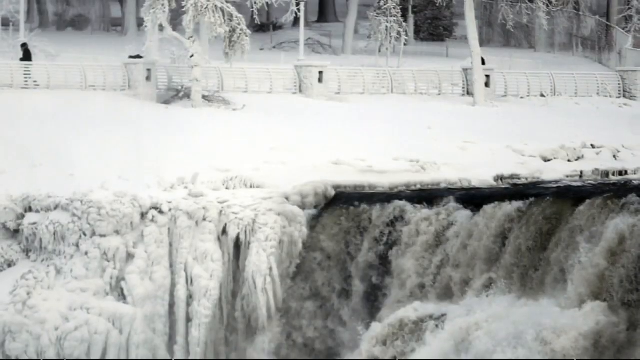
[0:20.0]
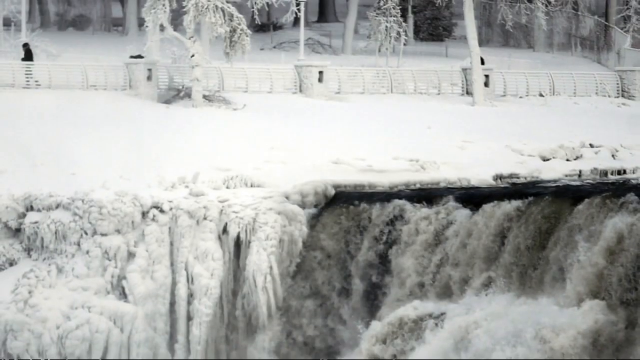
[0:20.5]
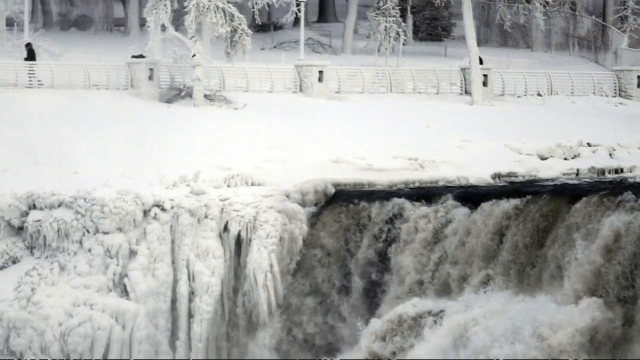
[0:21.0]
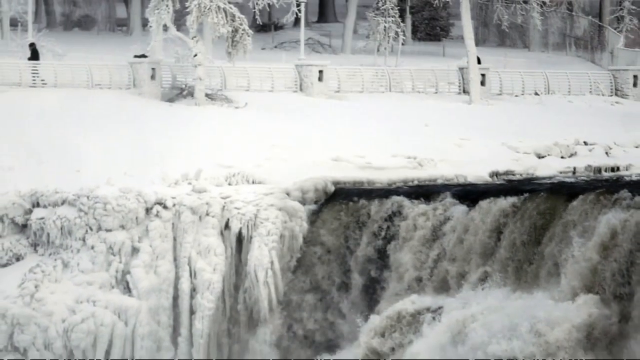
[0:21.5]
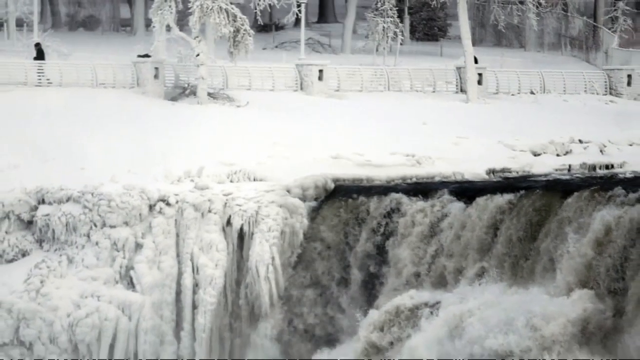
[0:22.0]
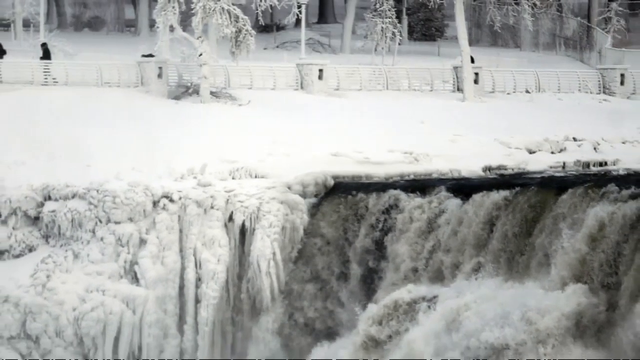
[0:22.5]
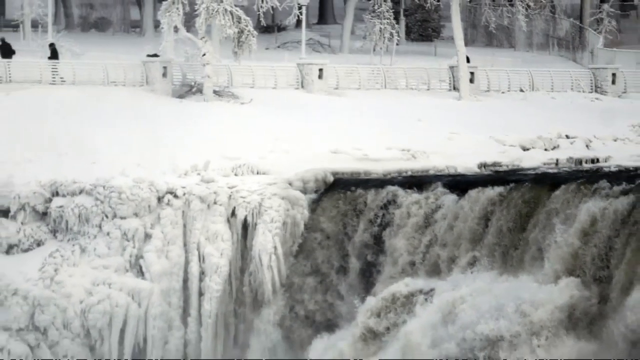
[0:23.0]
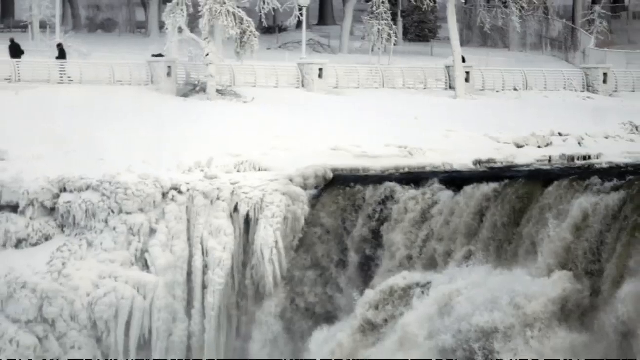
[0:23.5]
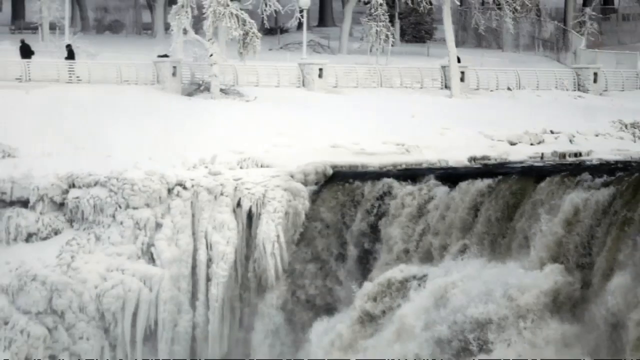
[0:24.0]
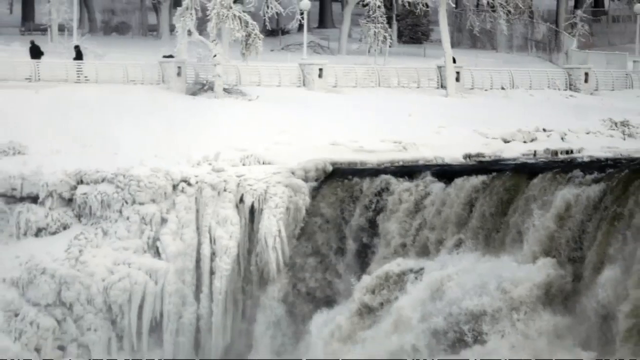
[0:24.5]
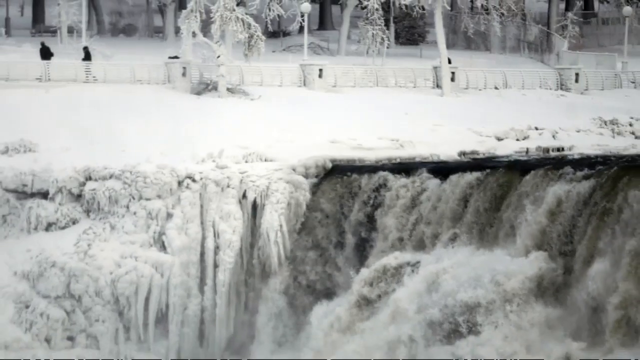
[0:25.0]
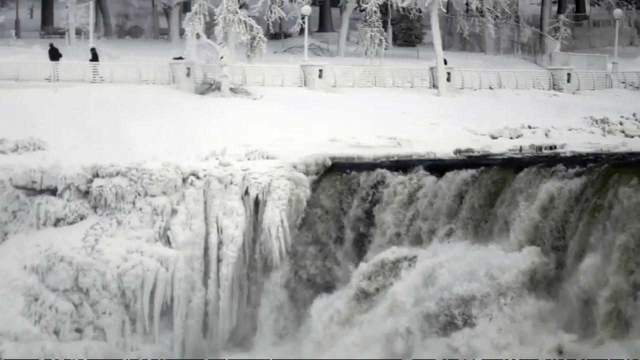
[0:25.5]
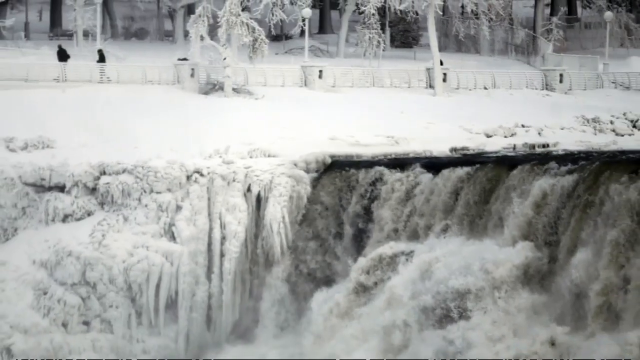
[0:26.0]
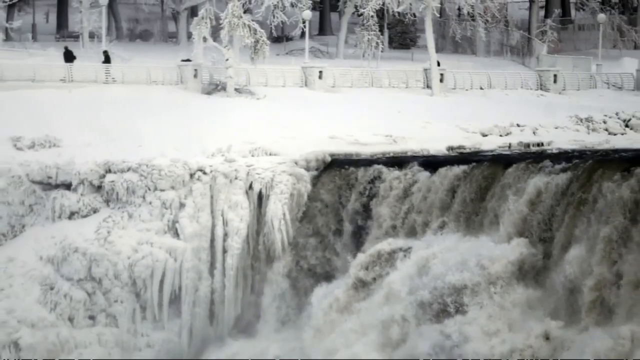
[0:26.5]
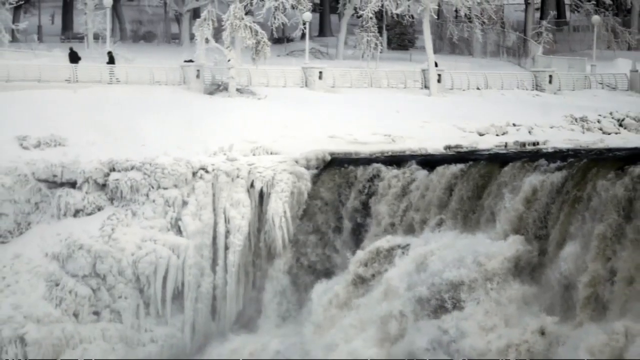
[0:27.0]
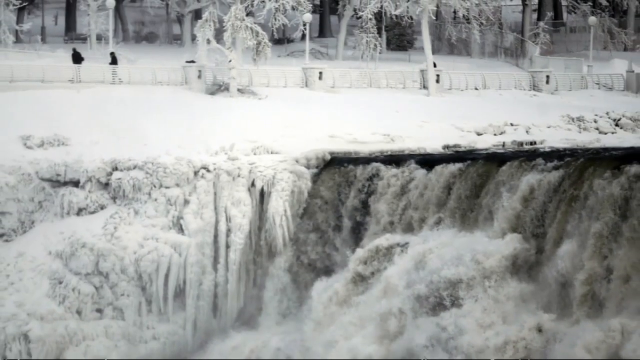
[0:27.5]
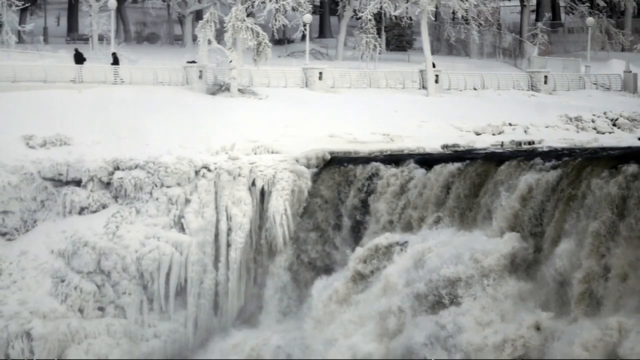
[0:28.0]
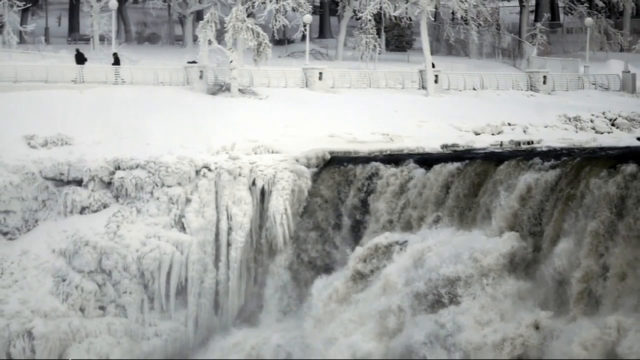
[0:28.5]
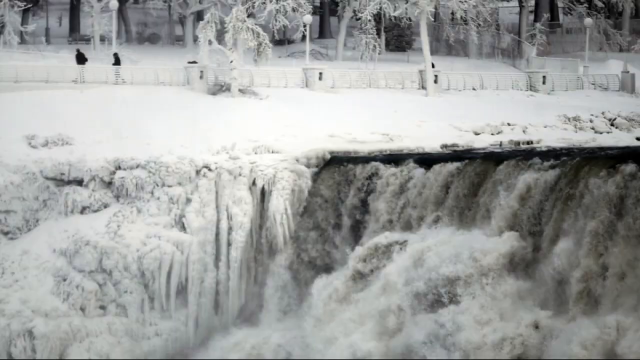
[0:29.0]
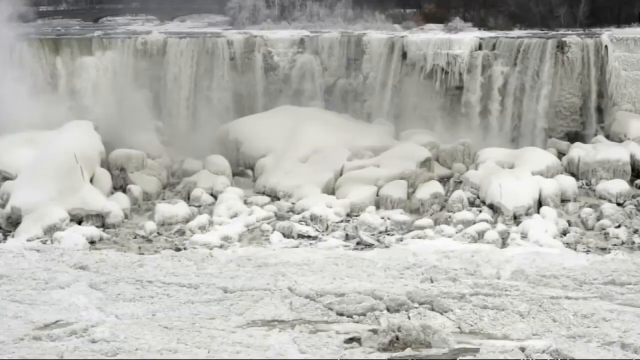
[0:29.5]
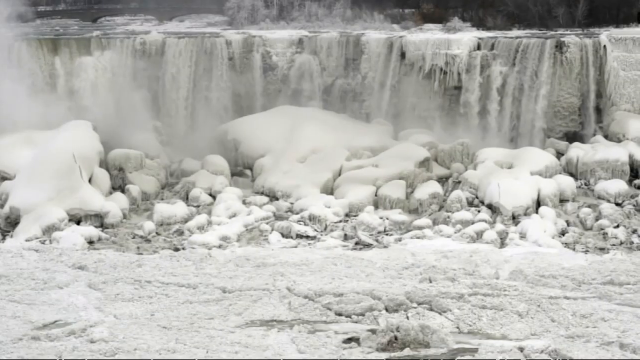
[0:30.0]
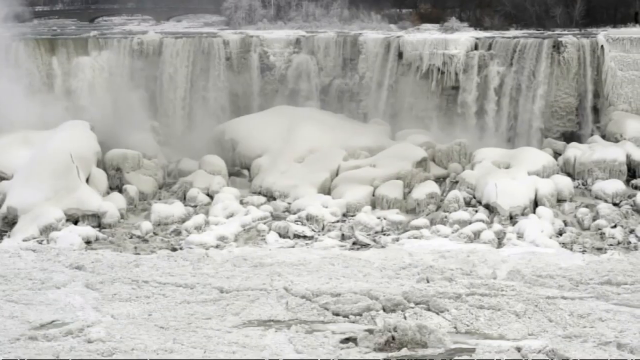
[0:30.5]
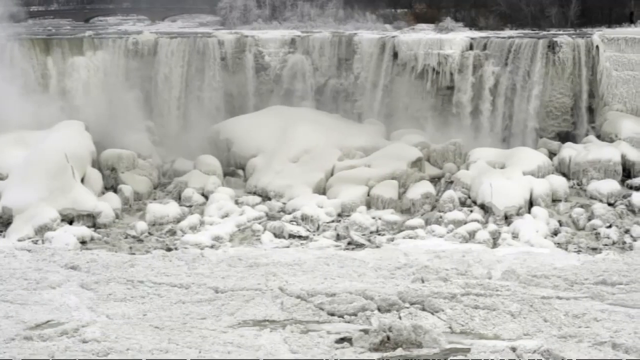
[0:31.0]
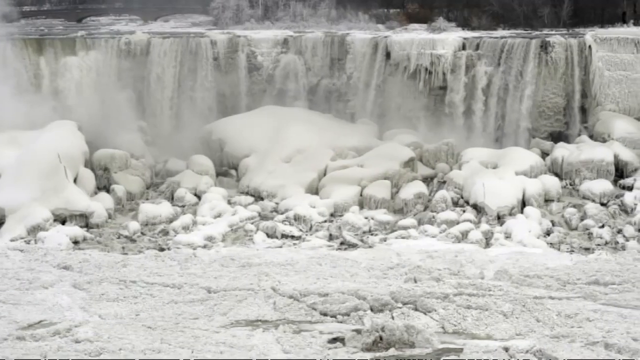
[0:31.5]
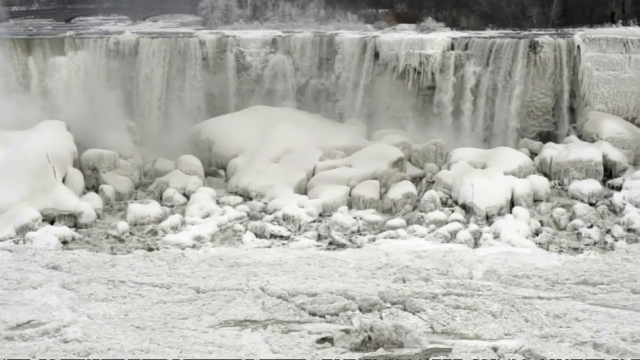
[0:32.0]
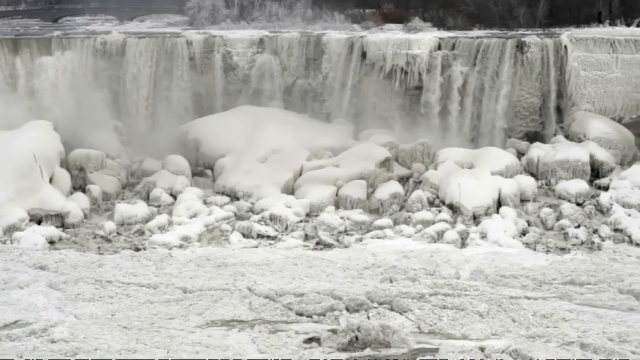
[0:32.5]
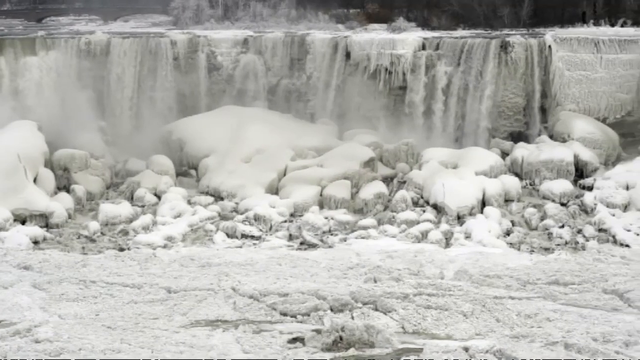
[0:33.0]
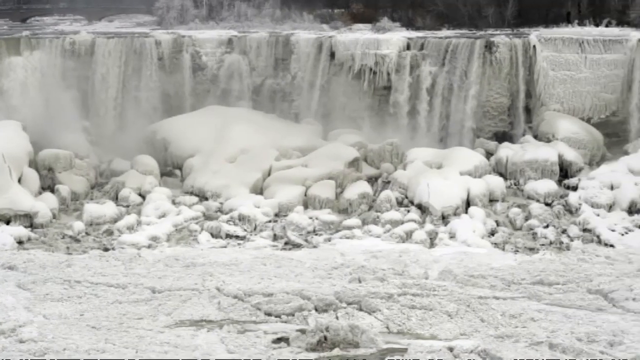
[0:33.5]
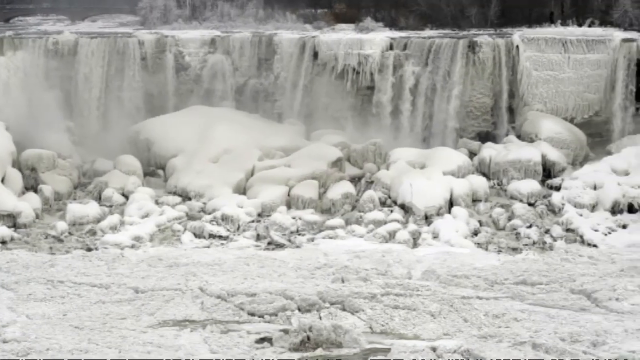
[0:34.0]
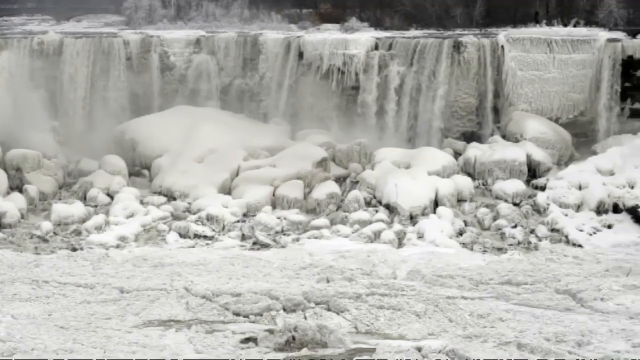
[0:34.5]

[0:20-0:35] The frozen landscape is shown with people in the background, then a frozen backdrop with two people walking behind it. A cracked, sort of mountainous-looking frozen landscape follows. Another shot shows what is maybe a park or walkway set up with a gate, with two people in black walking toward the top left corner of the image; they might be the same people as earlier. An elevated landscape of the waterfall appears, with something like a mountain ledge above it. Many frozen trees are in the area, and the elevated section of the waterfall seems to have two levels, maybe with a gap in between. A section of very clear white snow seems very fresh, and there seem to be light poles along the walking path that are covered and frozen. In the elevated section, many sheets of water and ice are frozen over. In the back there are maybe some houses or residences, or possibly more trees; it does not seem like a forest-style setting.